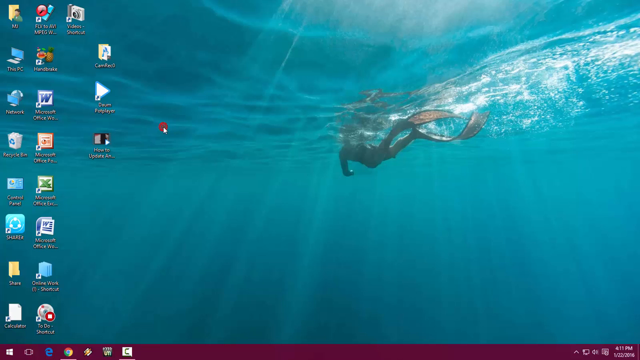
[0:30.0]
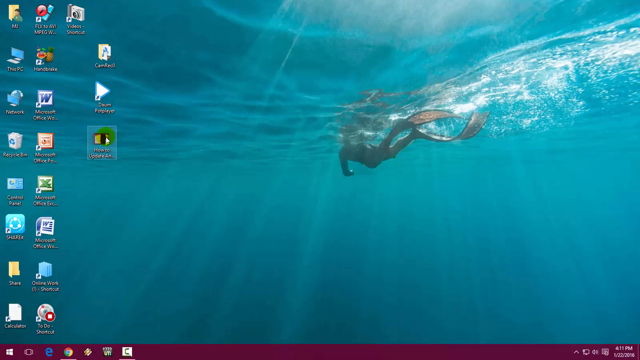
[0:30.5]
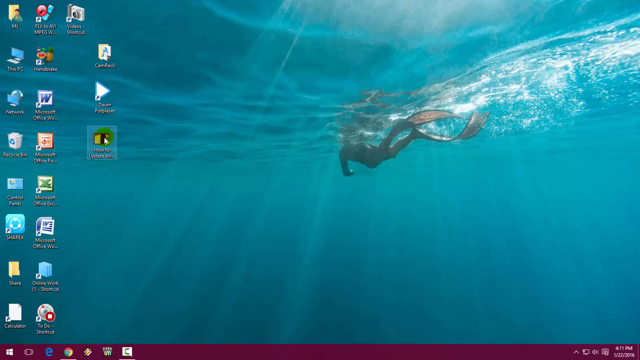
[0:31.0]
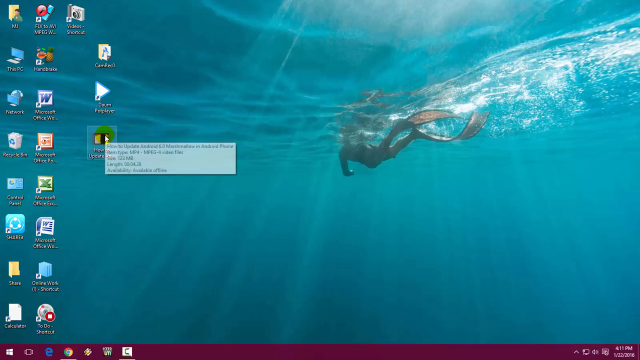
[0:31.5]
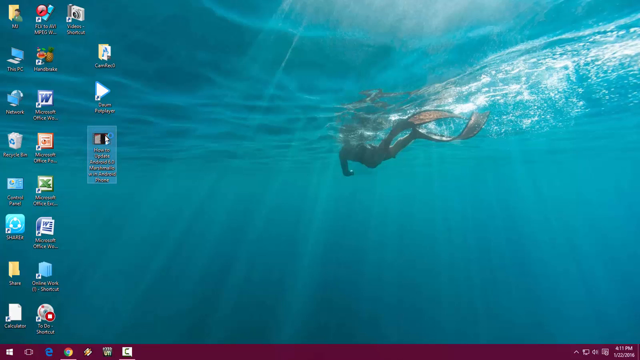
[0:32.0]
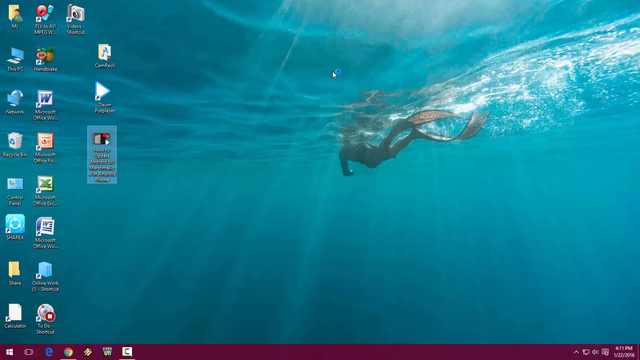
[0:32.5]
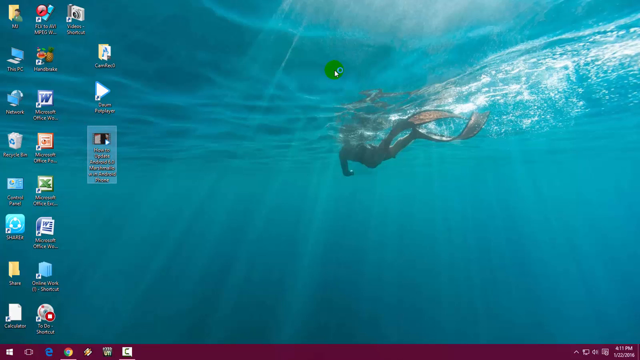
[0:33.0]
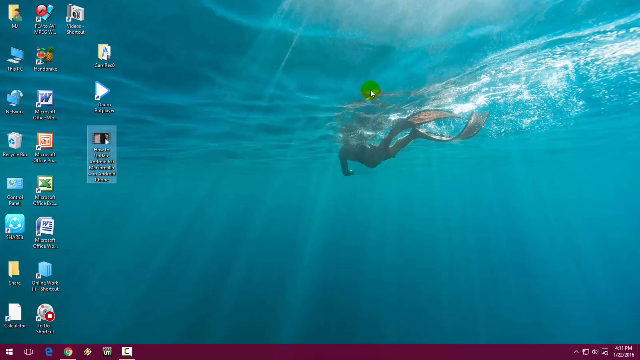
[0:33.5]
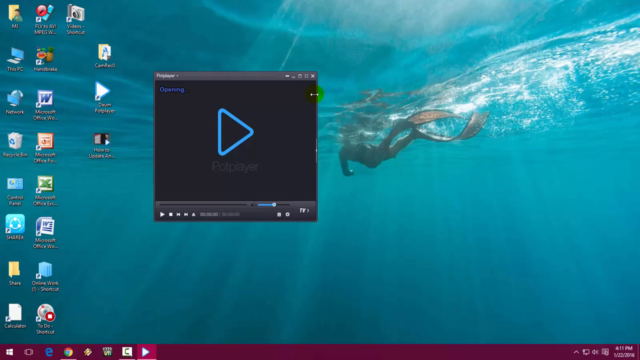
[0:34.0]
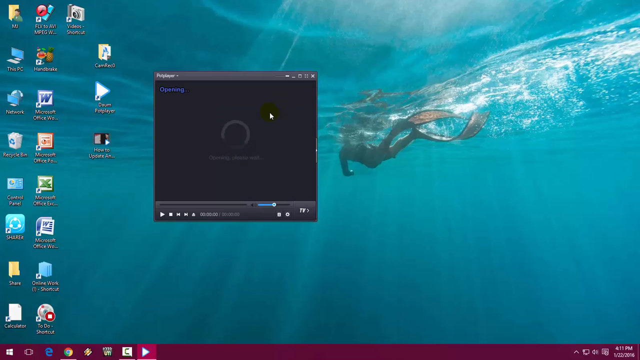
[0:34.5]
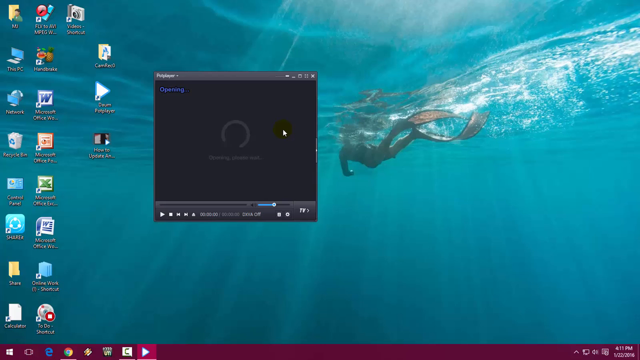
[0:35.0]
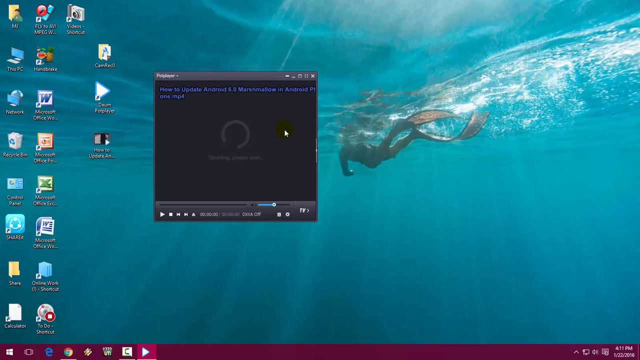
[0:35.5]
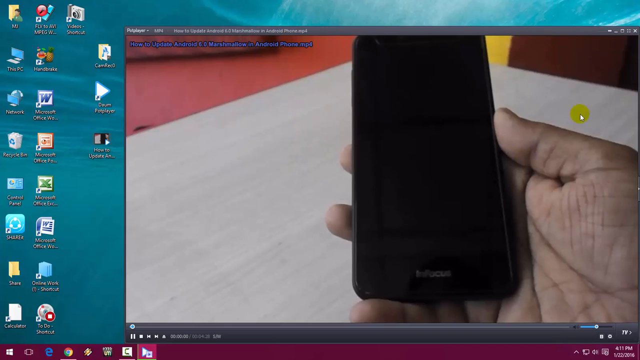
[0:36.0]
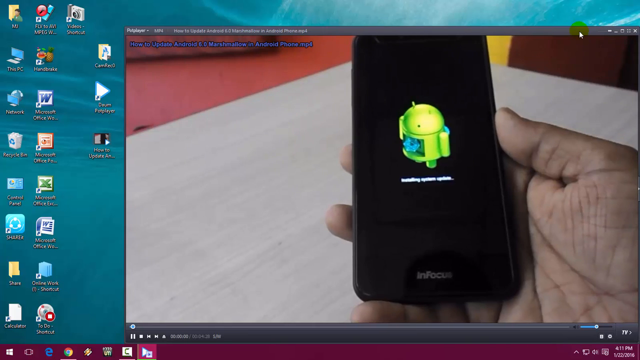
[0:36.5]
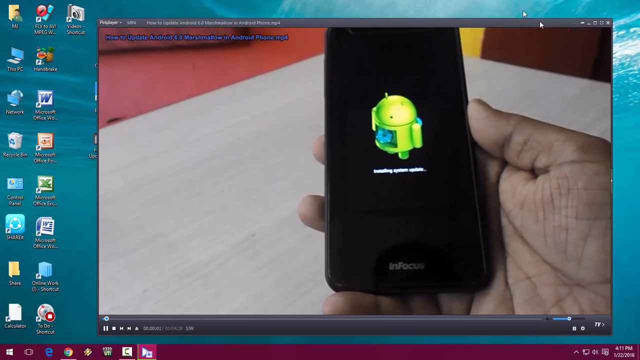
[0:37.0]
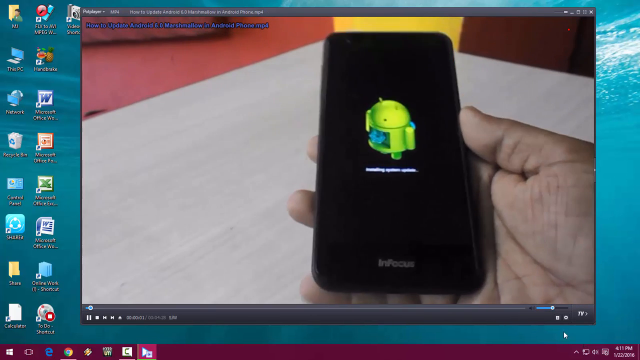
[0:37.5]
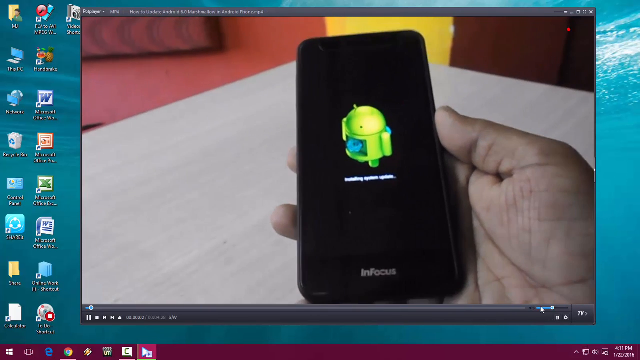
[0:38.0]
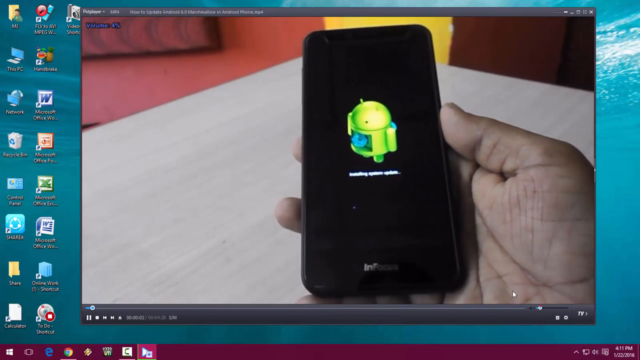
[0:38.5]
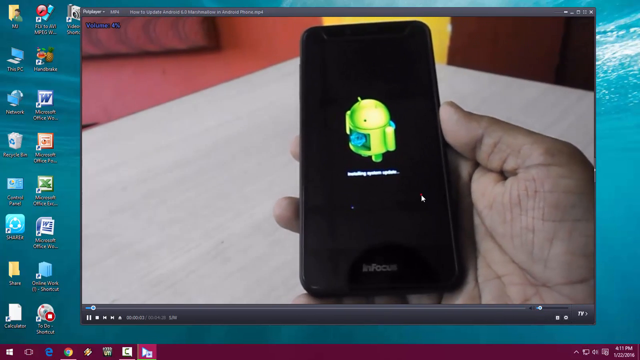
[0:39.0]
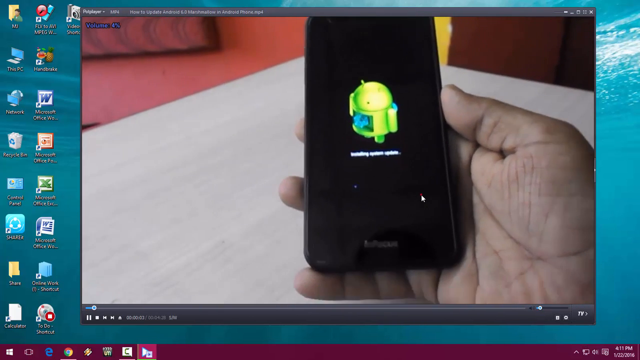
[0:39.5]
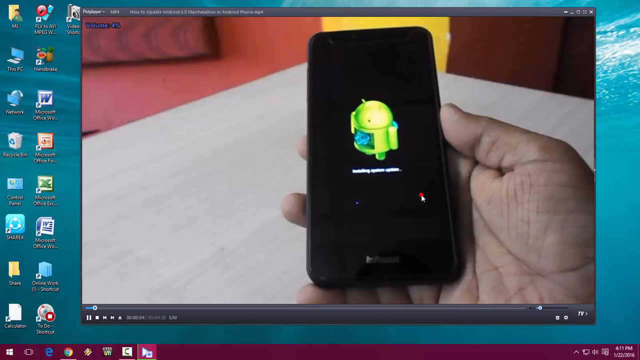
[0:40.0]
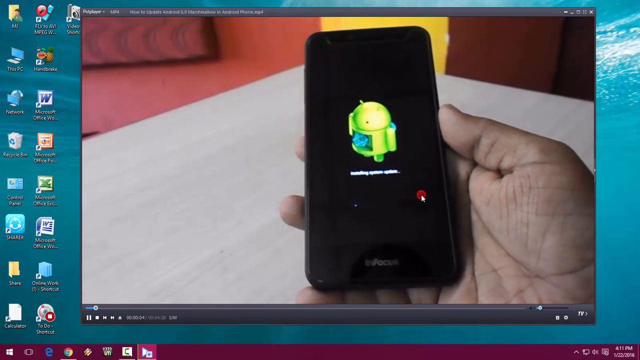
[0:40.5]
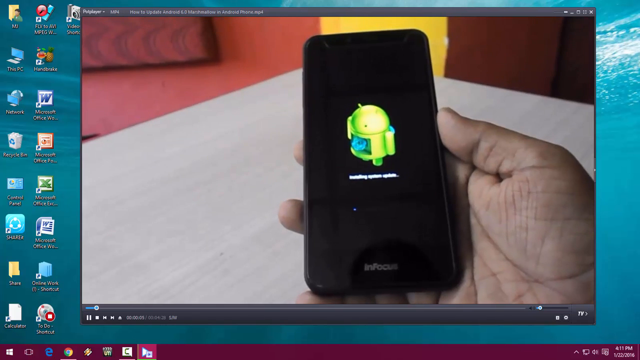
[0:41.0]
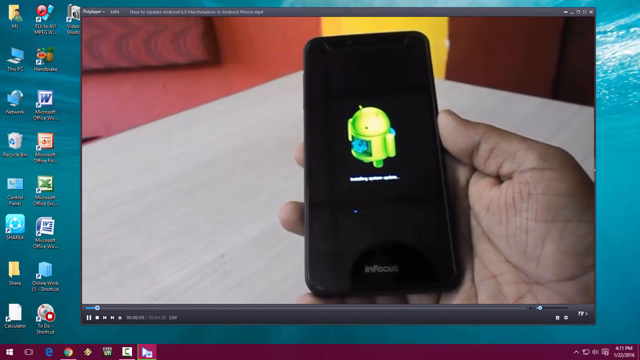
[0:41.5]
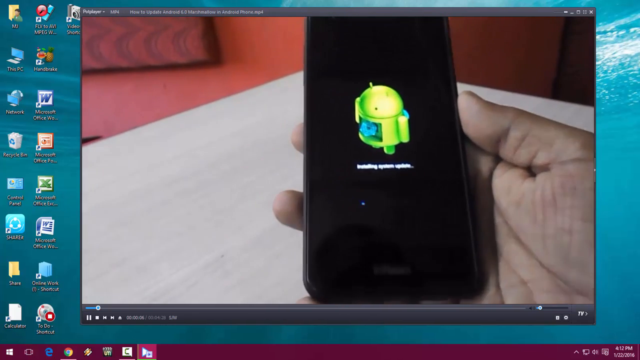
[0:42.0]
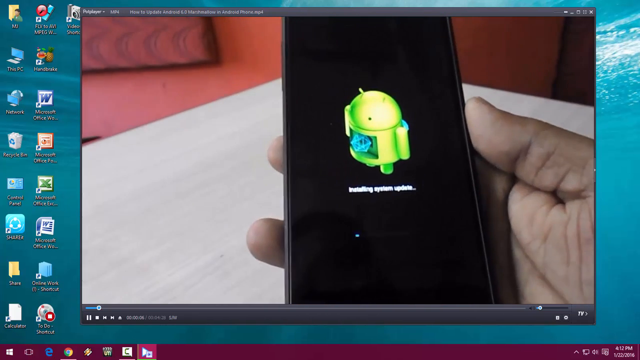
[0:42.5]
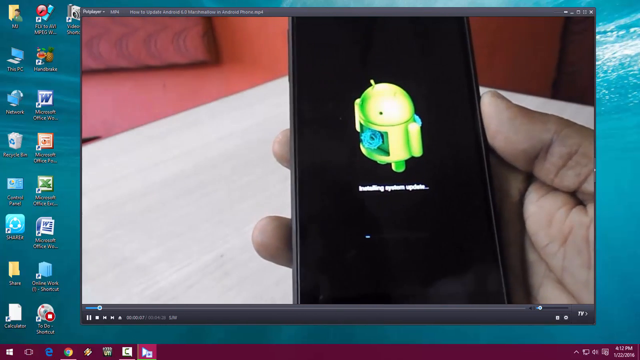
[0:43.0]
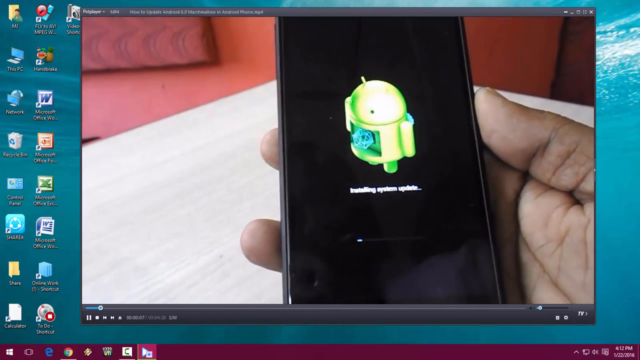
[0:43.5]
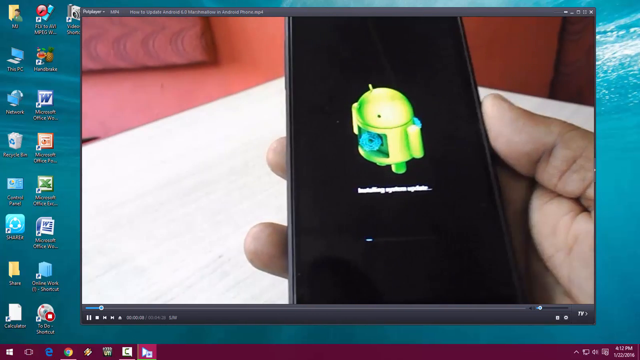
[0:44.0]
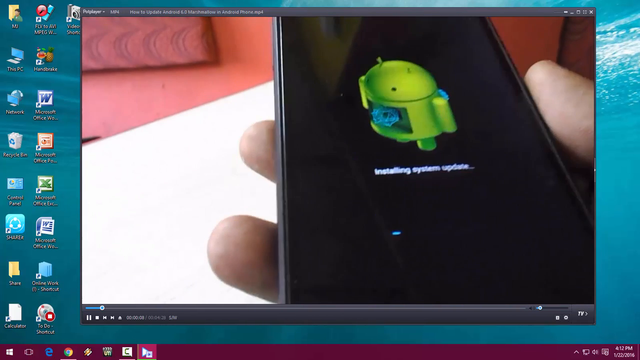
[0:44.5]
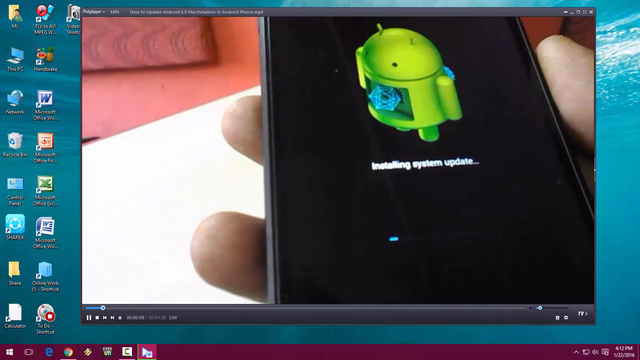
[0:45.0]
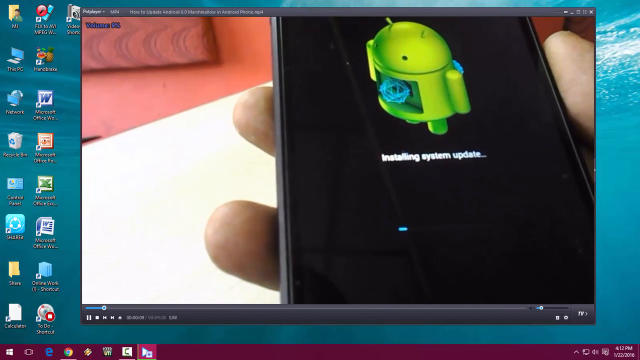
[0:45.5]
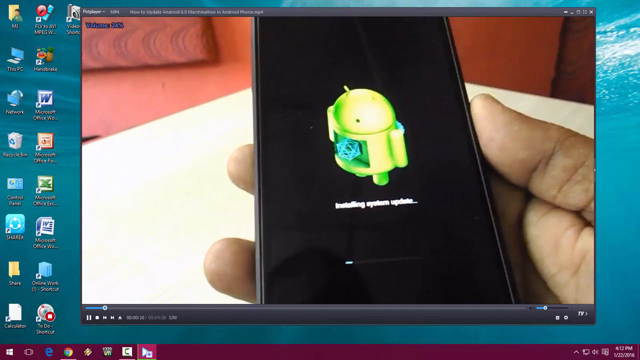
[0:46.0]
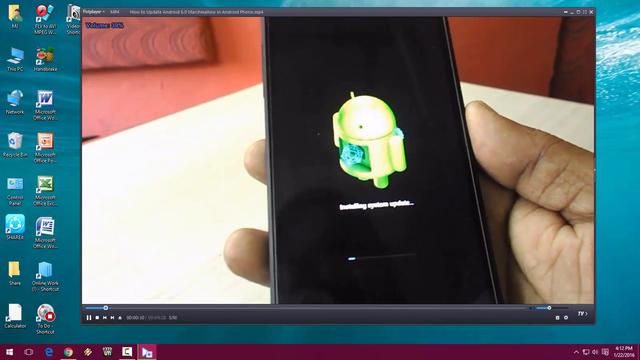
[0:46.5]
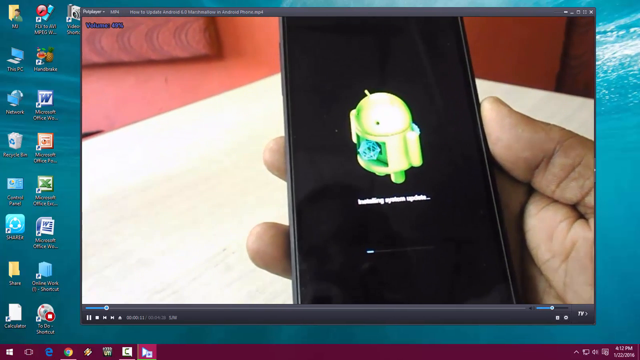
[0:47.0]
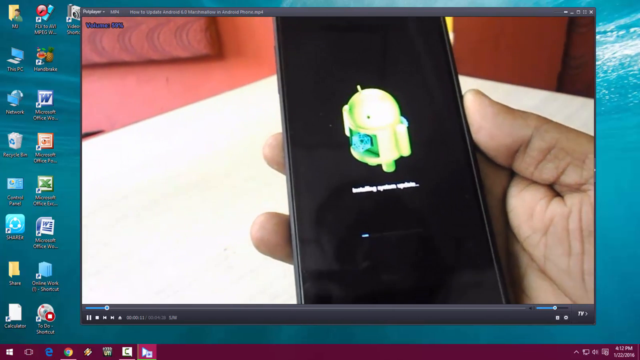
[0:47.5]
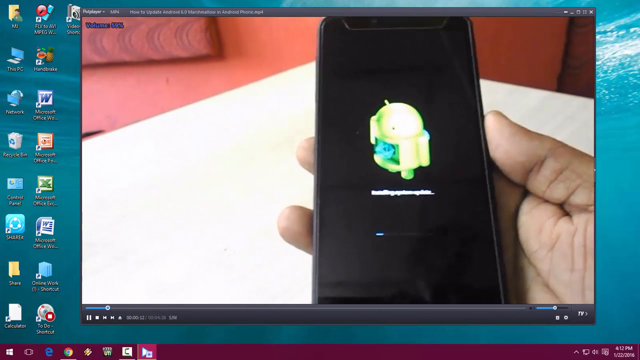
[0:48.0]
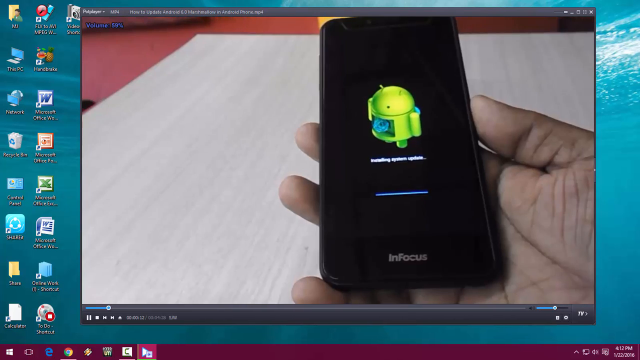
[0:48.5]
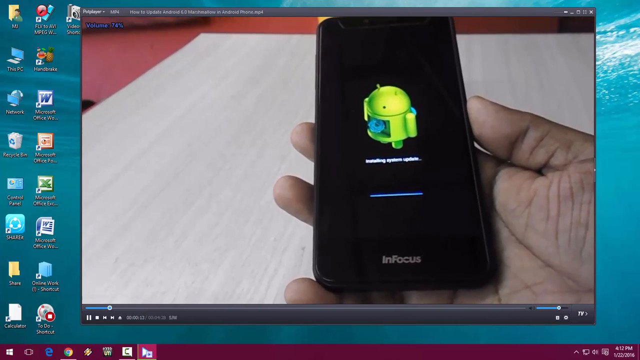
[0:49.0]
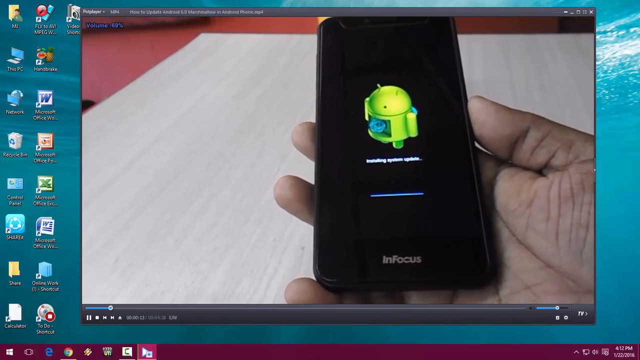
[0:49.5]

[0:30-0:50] A desktop screen has a background image of a person scuba diving. The cursor clicks a desktop icon that looks like a yellow square with a black vertical strip down the front right side, labeled "how to update an". The icon is double-clicked, opening a window that says "pot player" at the top, with a video screen loading. Once it finishes loading, it opens into a bigger screen where a video plays: a close-up of someone's hand holding an in-focus smartphone showing the green Android alien icon and a message that says "initializing system update". The camera kind of moves a little closer to the screen, showing a small progress bar with a little of the progress complete.